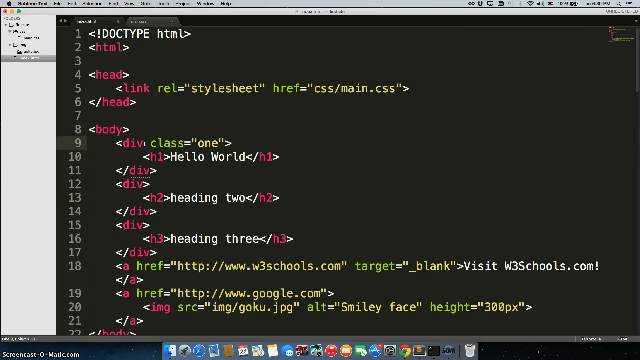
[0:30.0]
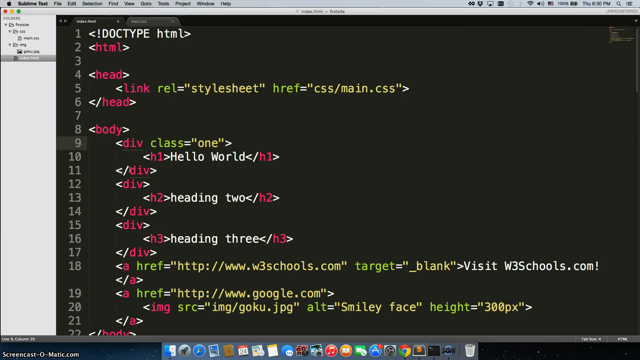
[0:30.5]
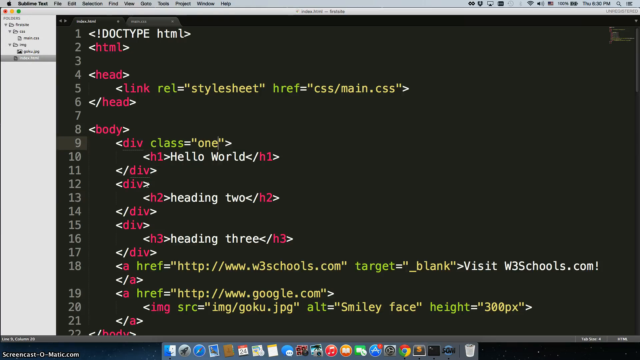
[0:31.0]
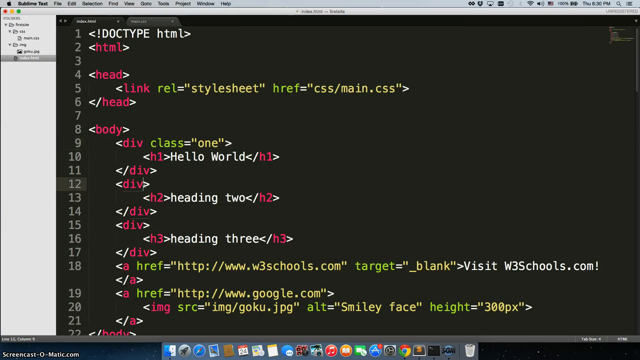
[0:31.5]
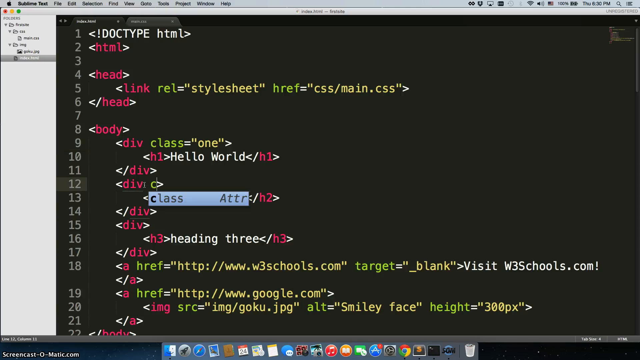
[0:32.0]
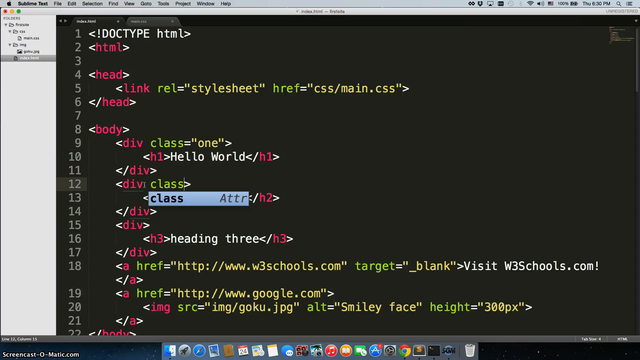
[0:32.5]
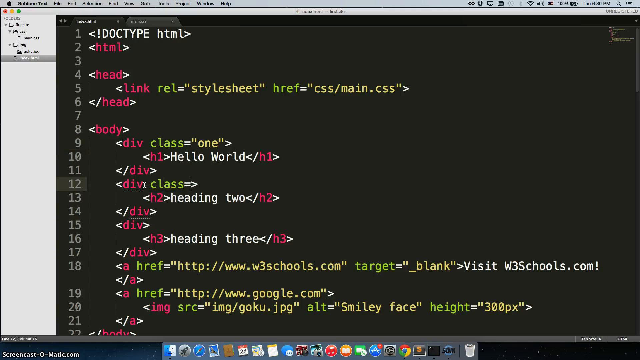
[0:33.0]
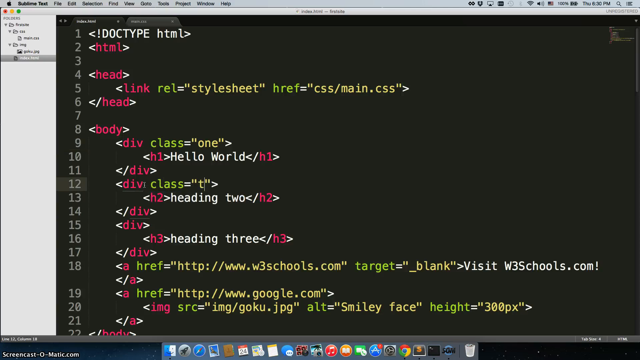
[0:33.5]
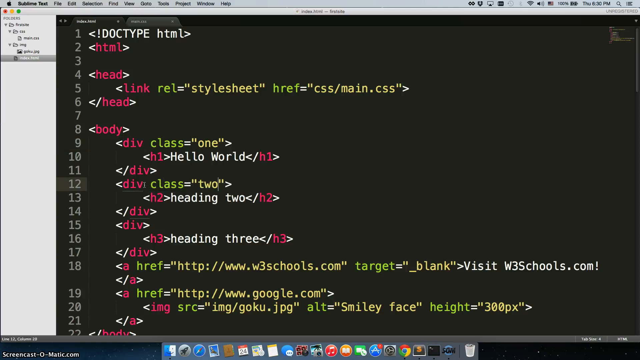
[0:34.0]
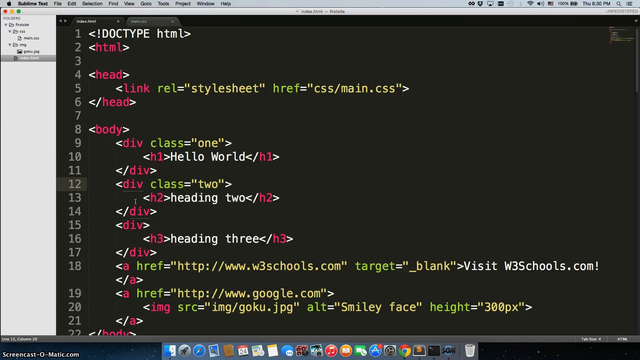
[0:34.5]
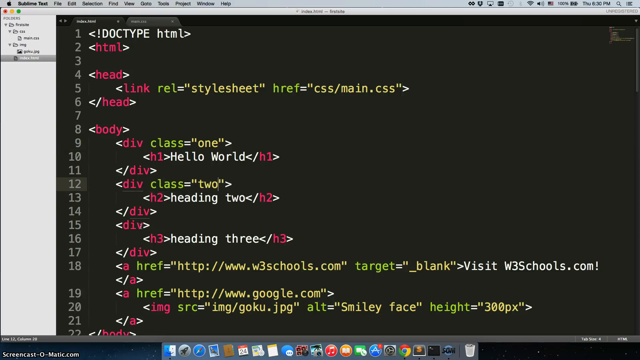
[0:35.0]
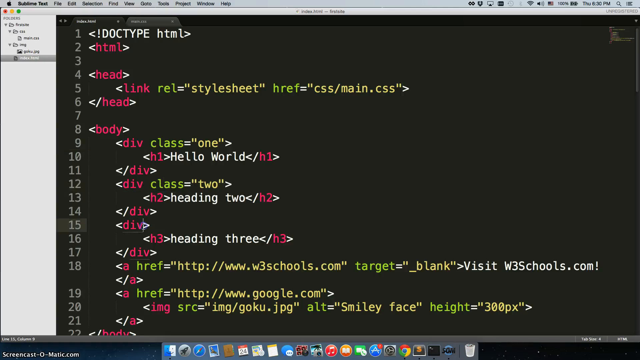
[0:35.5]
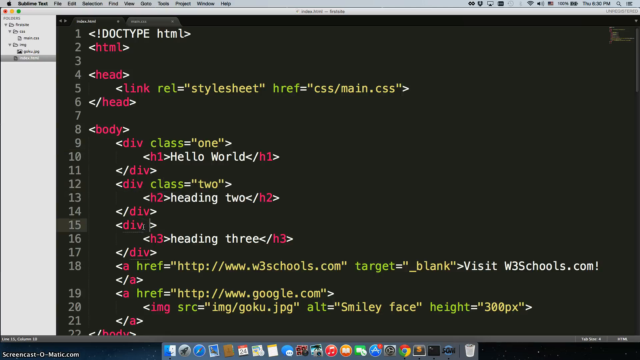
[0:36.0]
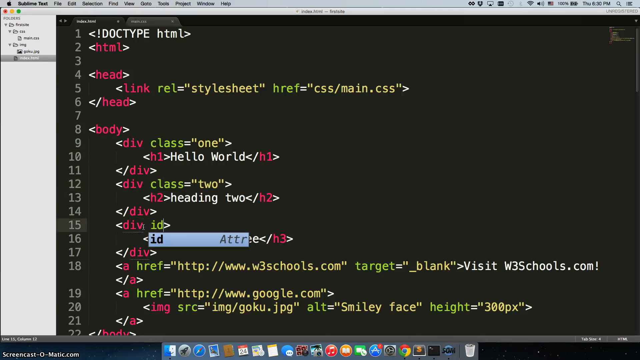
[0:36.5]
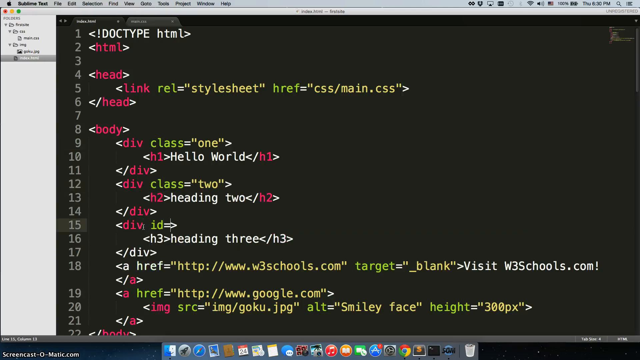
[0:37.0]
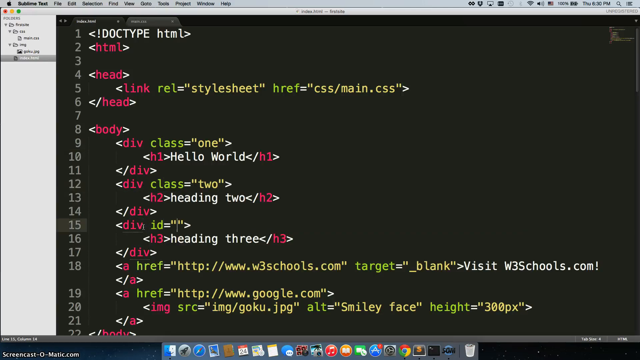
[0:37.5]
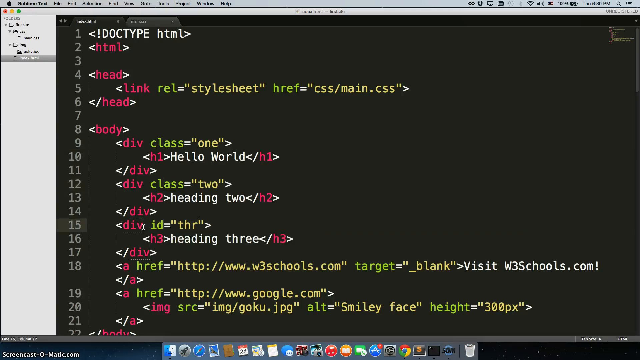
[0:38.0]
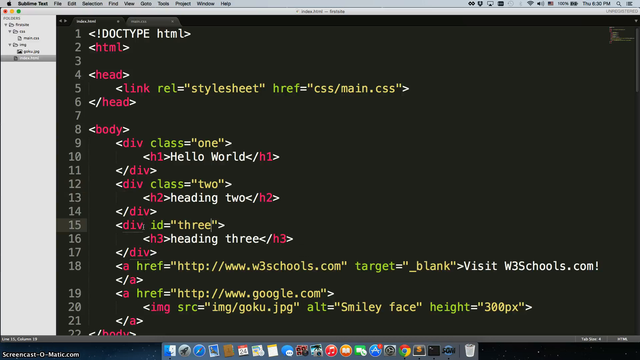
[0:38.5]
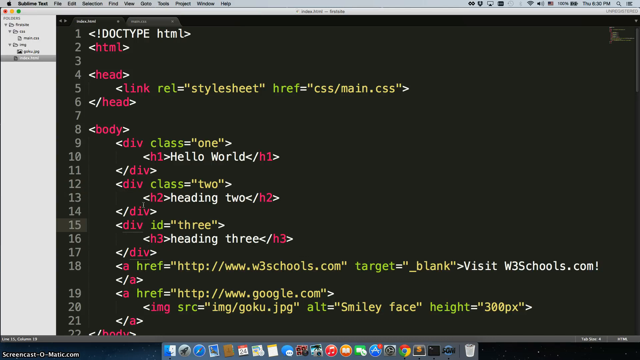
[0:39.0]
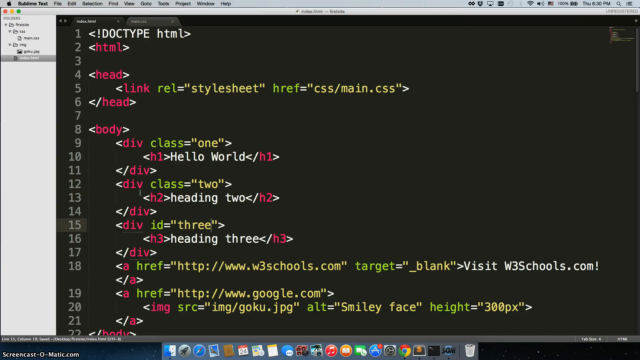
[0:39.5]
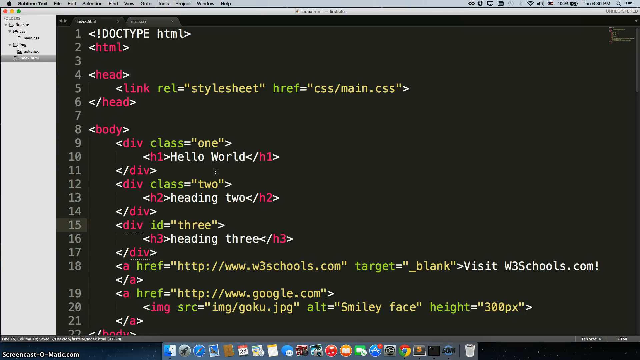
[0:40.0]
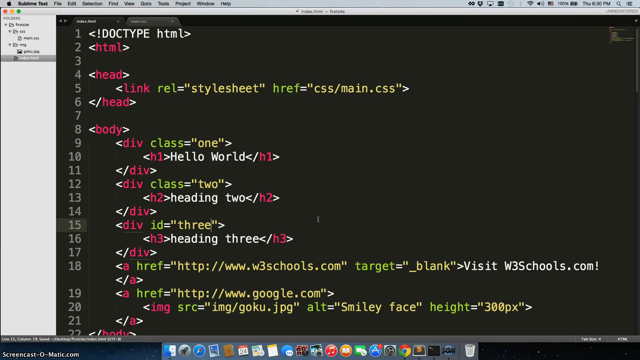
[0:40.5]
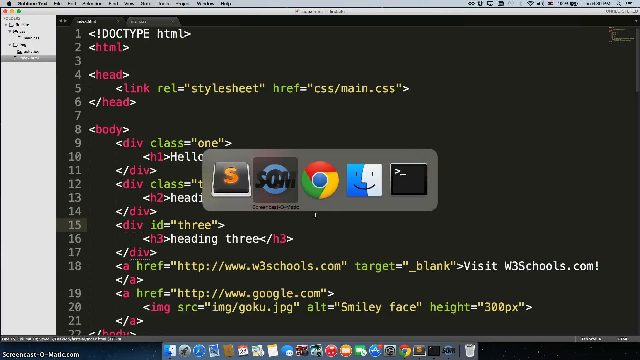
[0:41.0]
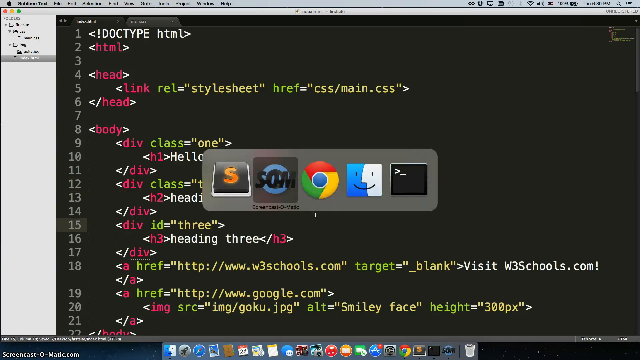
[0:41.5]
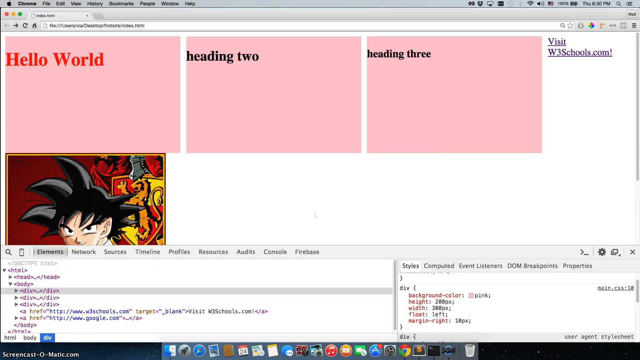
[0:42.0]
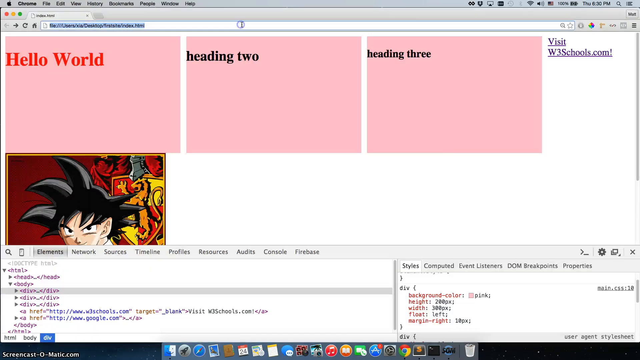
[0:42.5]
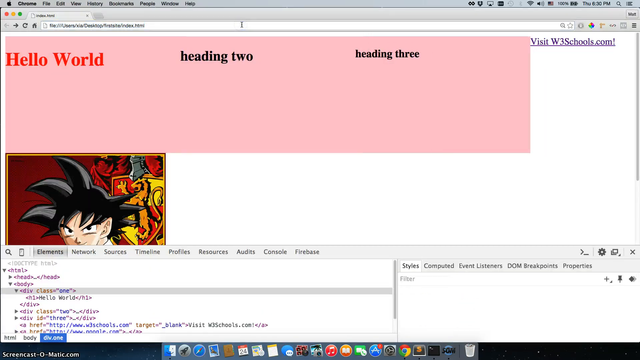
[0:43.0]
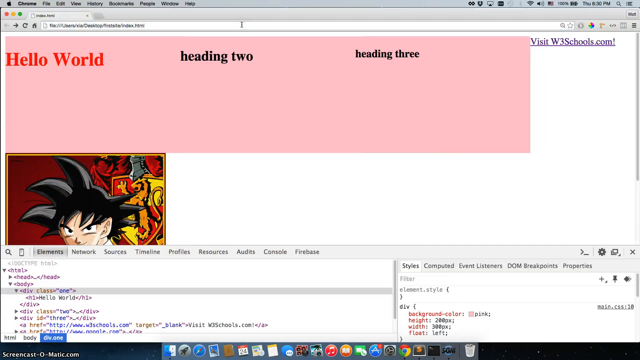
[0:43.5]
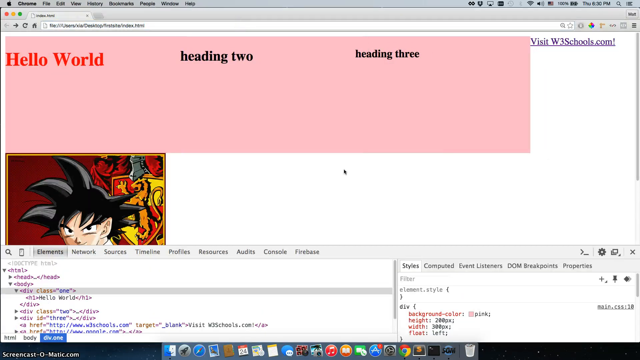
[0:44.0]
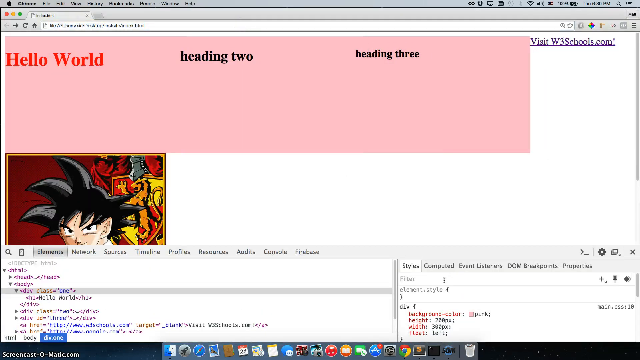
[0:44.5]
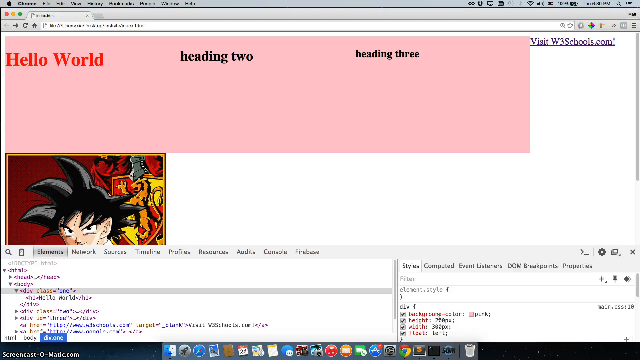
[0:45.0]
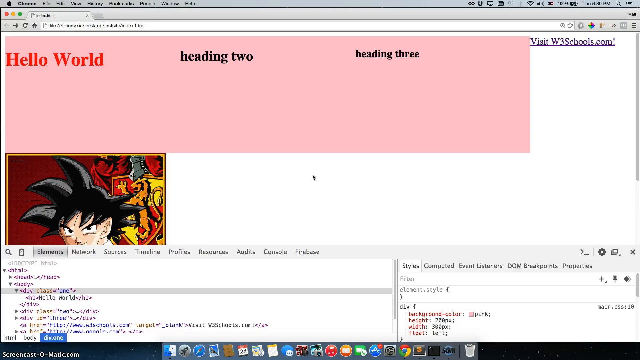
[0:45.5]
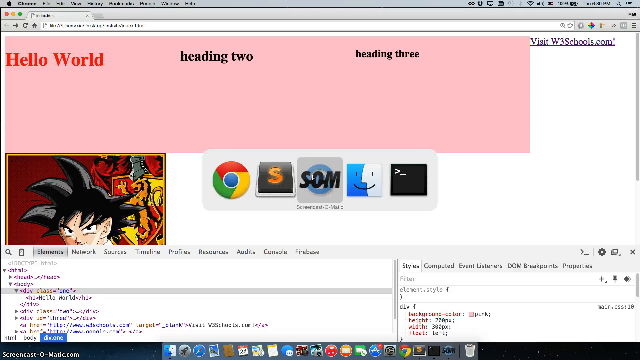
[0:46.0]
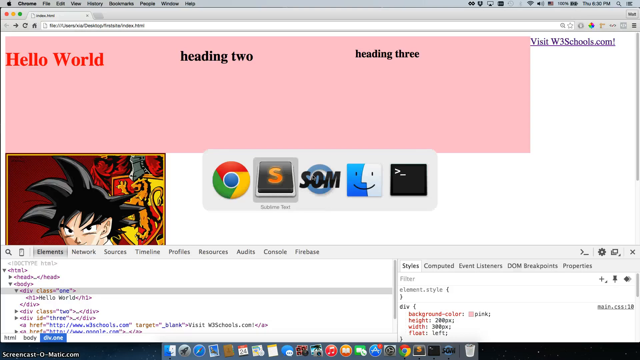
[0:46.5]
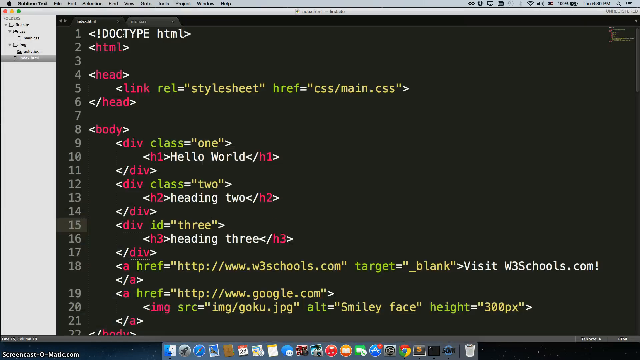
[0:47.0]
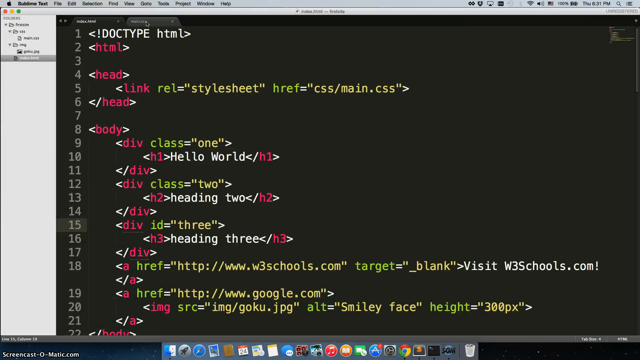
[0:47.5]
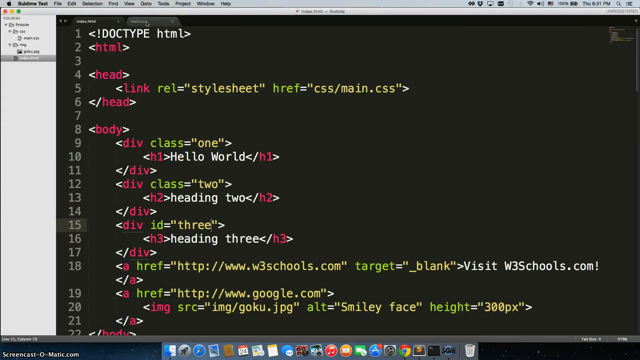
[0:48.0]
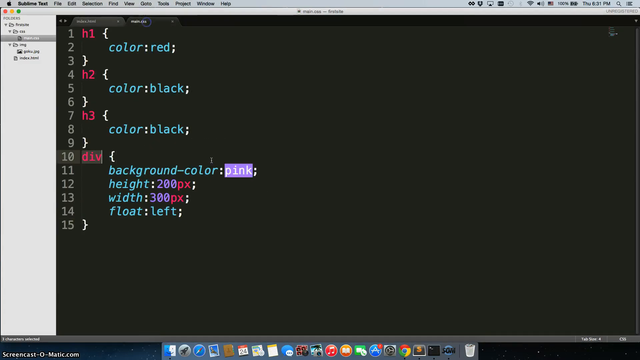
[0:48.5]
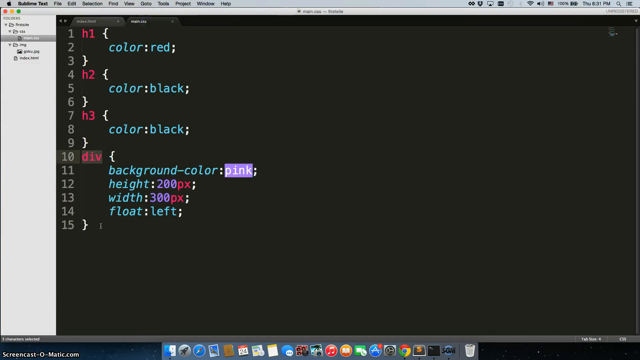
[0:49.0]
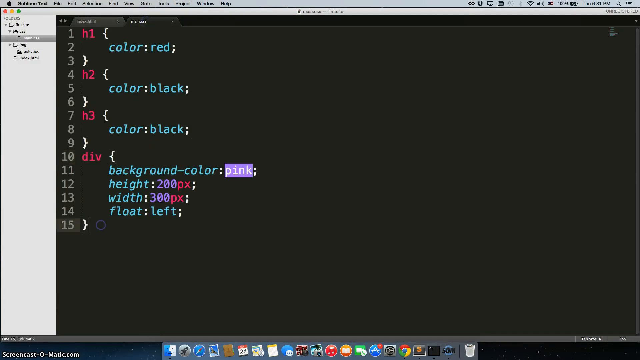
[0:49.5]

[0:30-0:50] Text is typed: class equals two, and another piece of text, id equals three. The view then switches to Google Chrome, where the text is copied into the text bar. The Chrome window shows different boxes with different texts. It then switches to another coding window showing text in sea green and red, with some text highlighted, and finally back to the original coding window, where the code appears in white, red and yellow. It ends on the original coding window, with code that starts with "Doctype html".